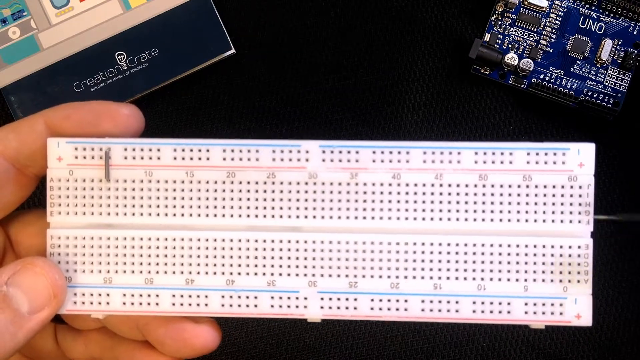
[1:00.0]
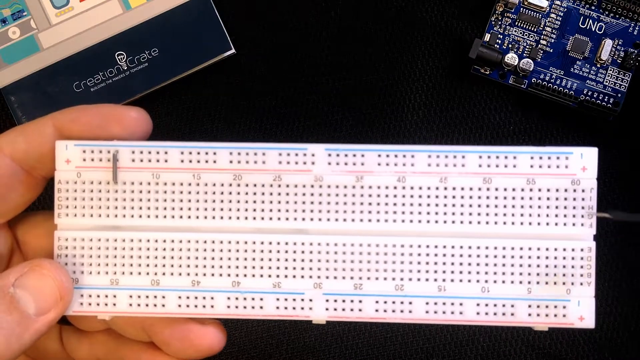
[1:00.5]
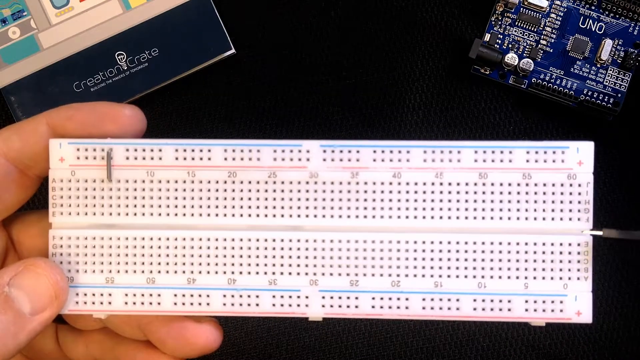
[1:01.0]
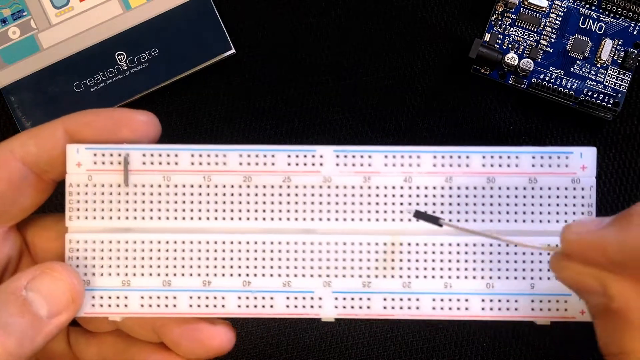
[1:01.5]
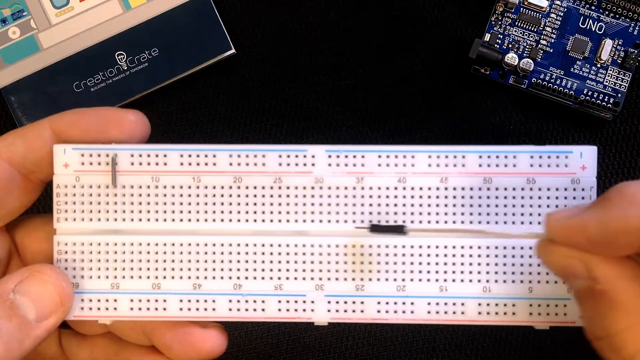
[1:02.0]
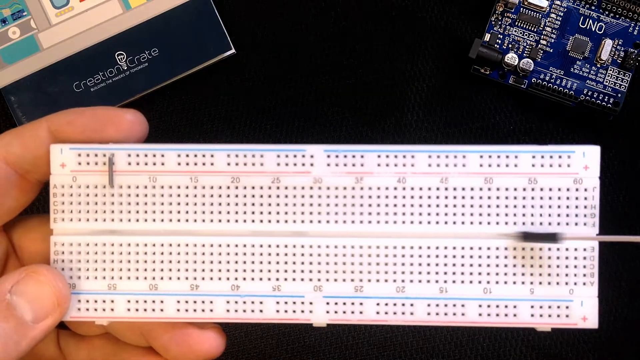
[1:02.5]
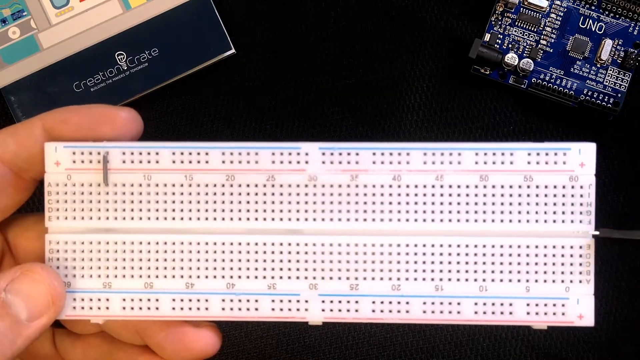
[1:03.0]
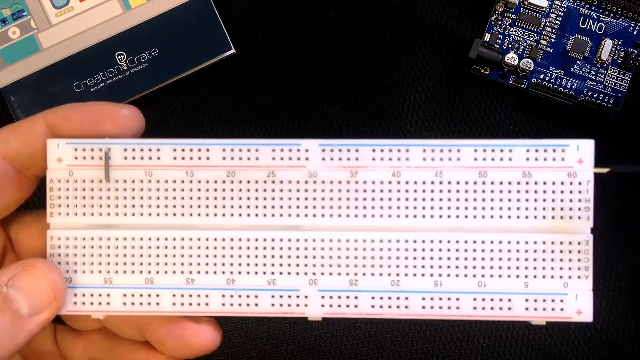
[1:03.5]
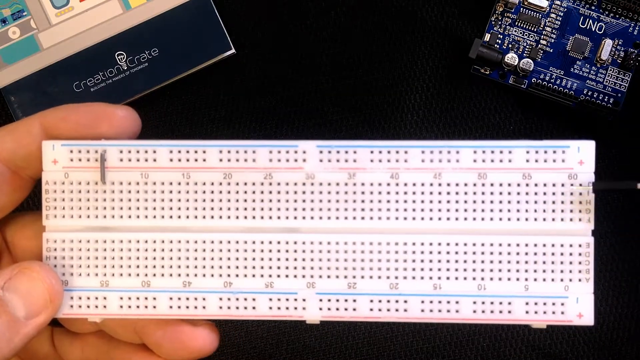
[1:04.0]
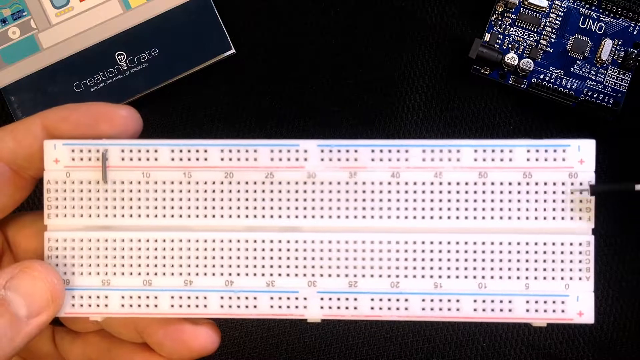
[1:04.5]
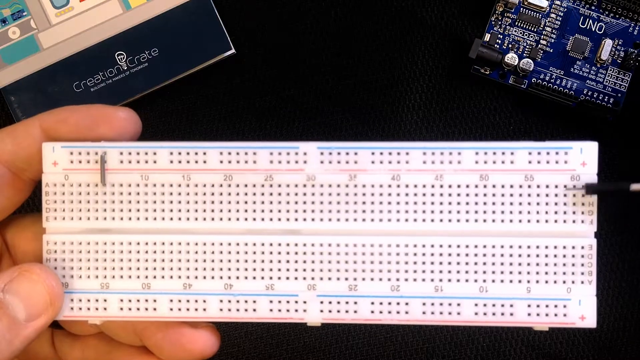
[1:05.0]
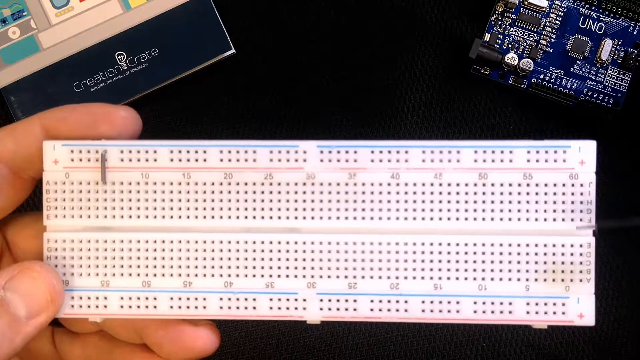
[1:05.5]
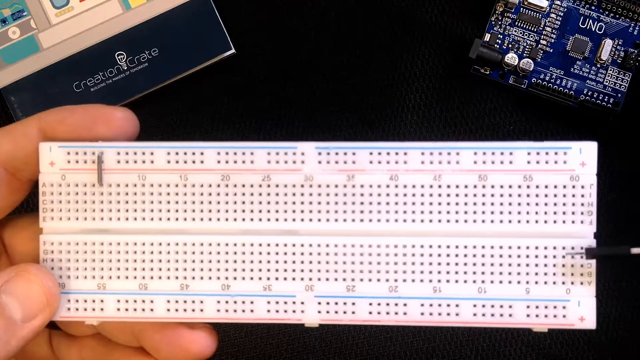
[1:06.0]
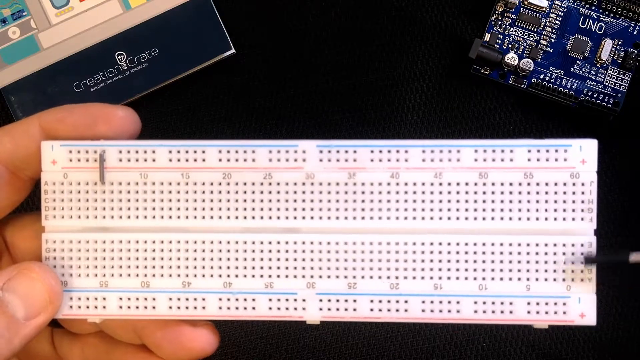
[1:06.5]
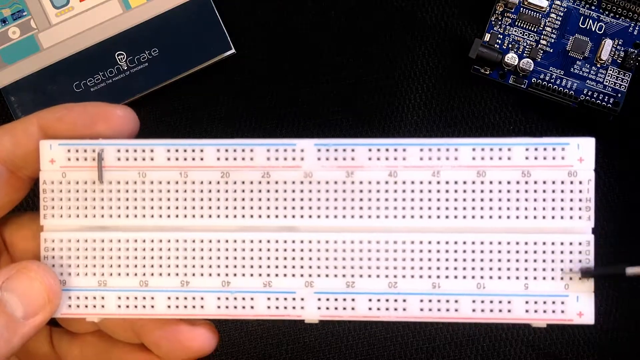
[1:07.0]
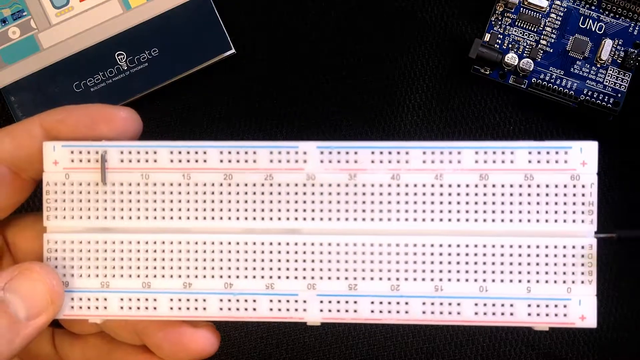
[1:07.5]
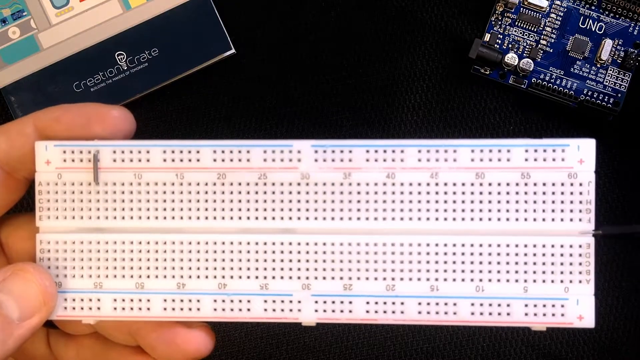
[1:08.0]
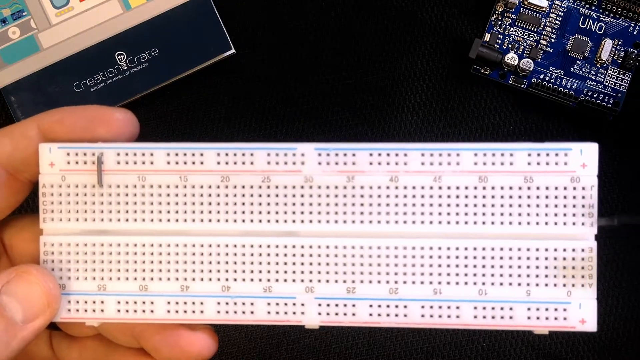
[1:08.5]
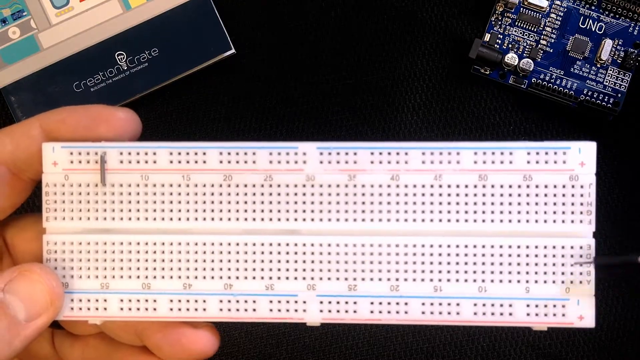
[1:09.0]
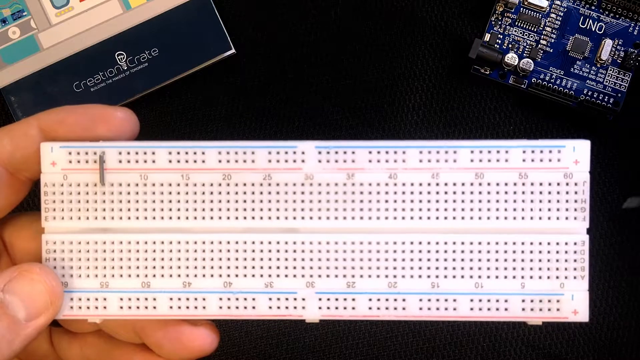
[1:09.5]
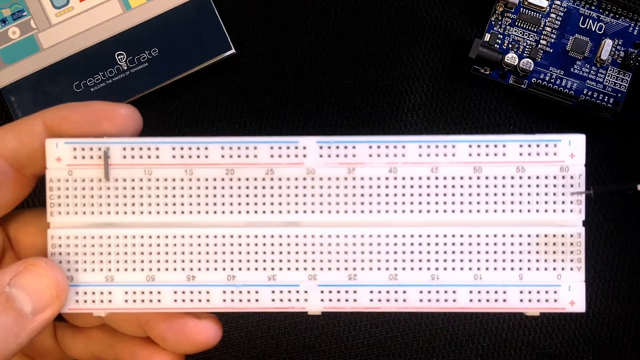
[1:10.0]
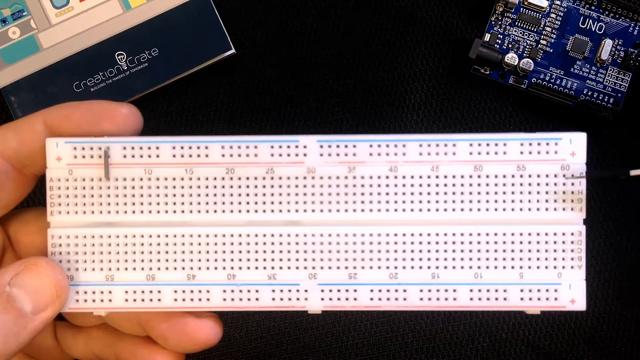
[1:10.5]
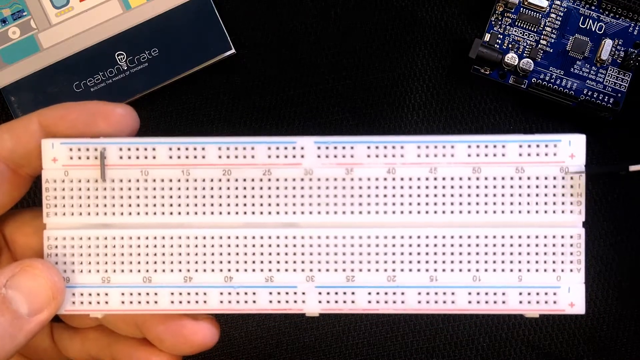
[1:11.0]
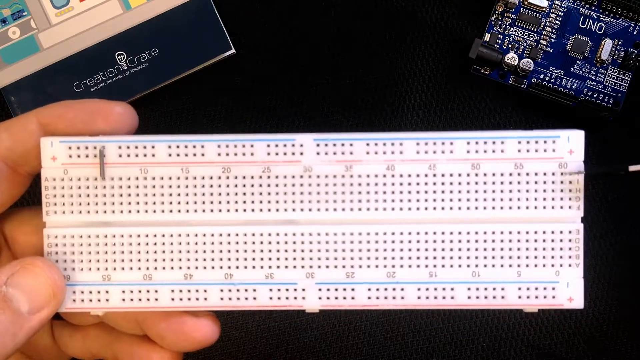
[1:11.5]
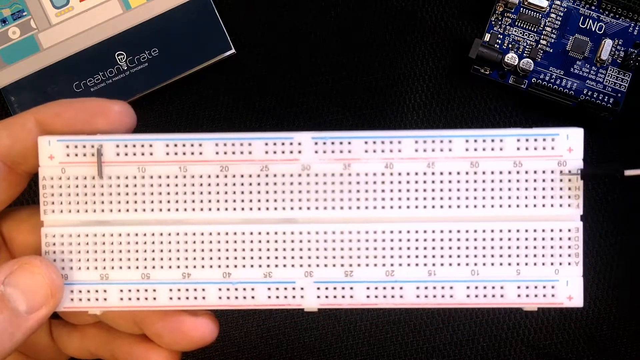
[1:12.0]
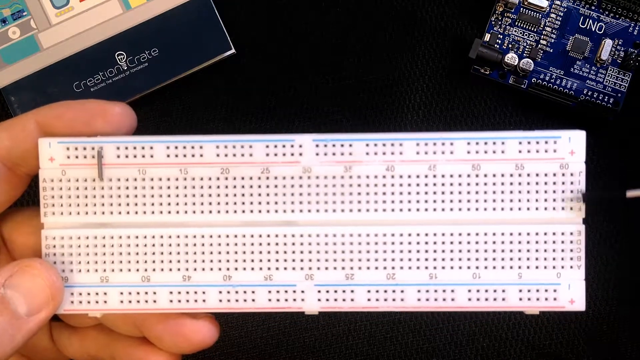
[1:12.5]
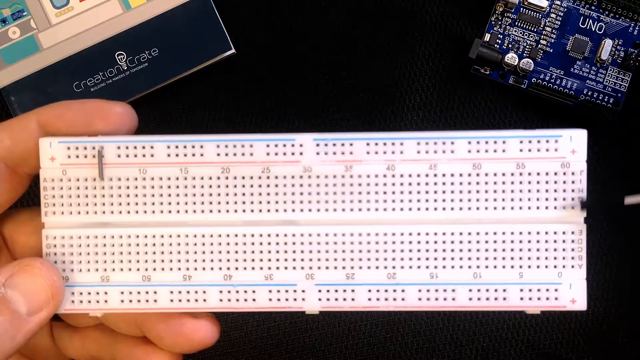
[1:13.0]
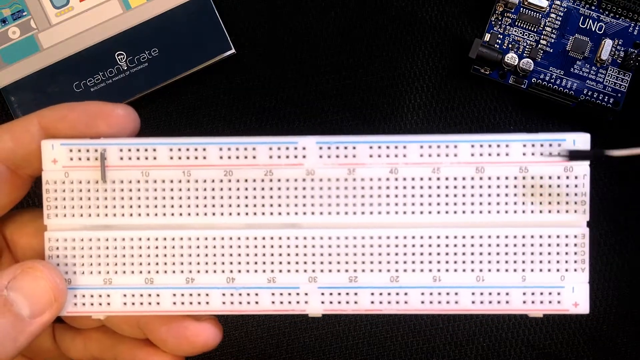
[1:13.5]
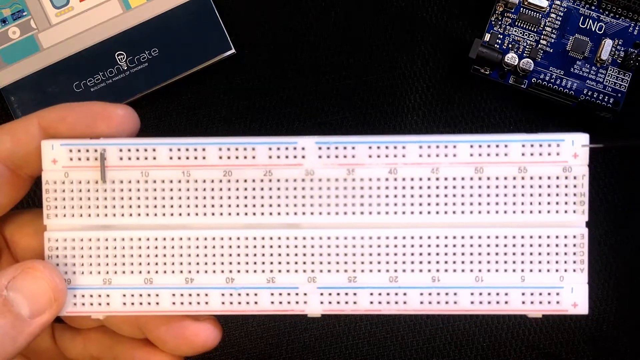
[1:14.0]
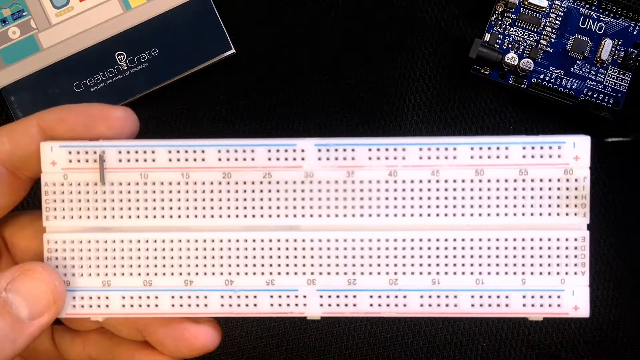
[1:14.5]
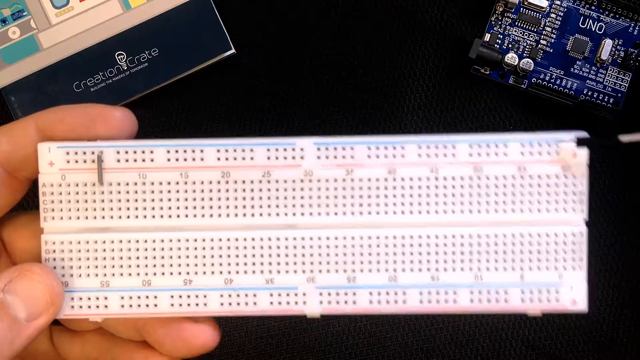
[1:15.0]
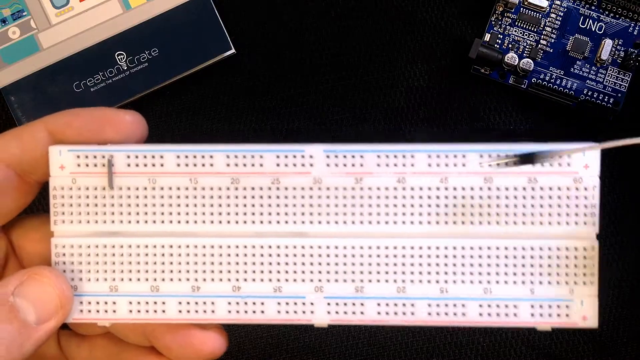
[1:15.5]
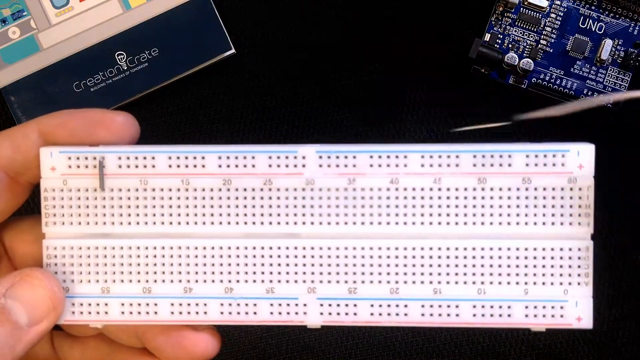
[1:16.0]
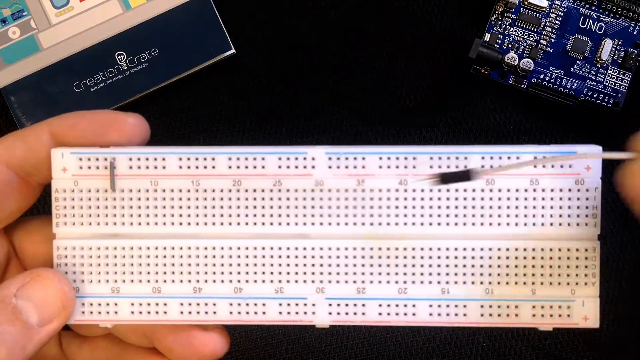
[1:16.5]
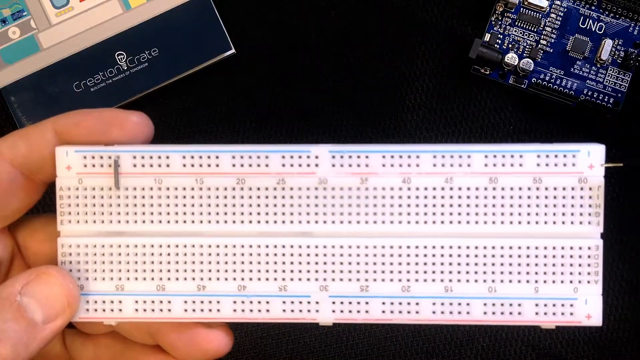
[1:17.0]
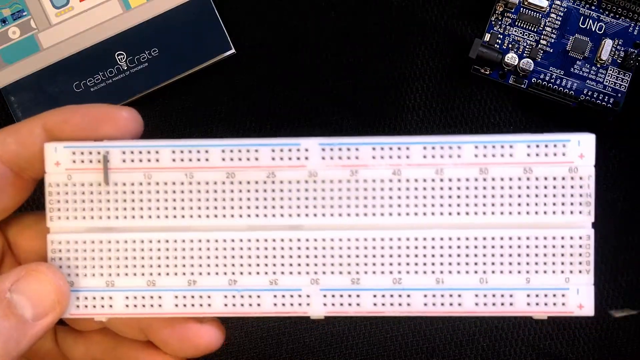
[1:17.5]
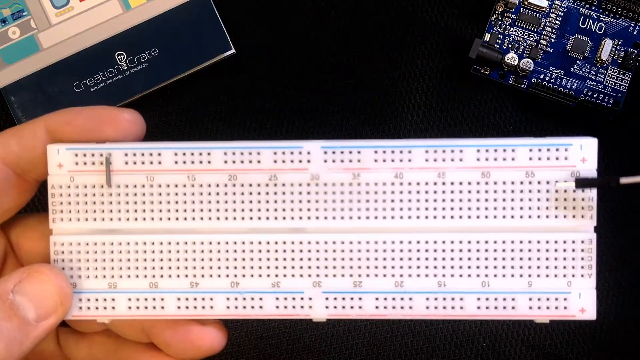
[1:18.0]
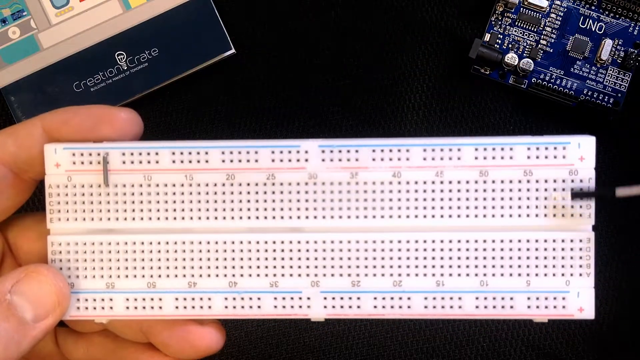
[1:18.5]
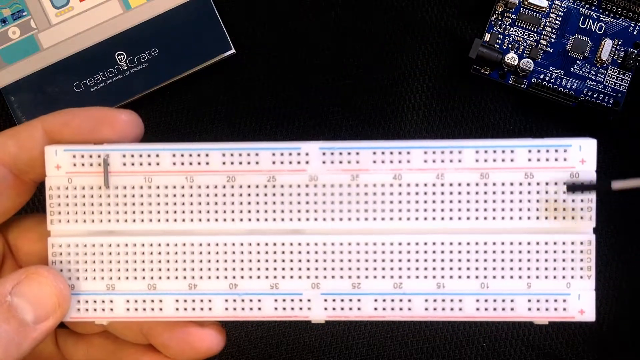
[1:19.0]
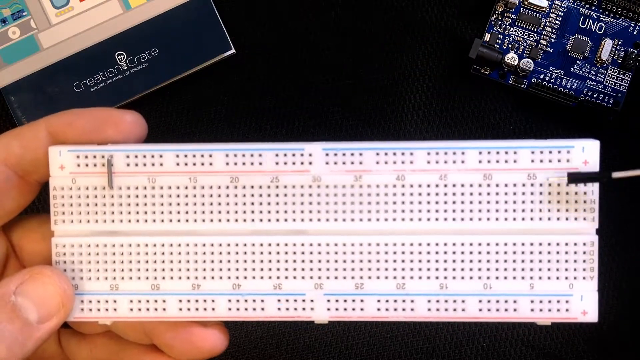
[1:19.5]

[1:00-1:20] The vertical and horizontal connections of the breadboard are shown, with the connections of A, B, C, D, E and F shown as different from those of the other lettered rows. The numbers 0, 5, 10, 15, 20, 25, 30, 35, 40, 45, 50, 55 and 60 are shown. A thin blue line runs along the top of the breadboard and a thin red line is below it, with positive and negative indicators. Everything is on a black, dark background, with a panel in the top right corner and a creation crate in the left corner. The descriptor's fingers are clearly visible.